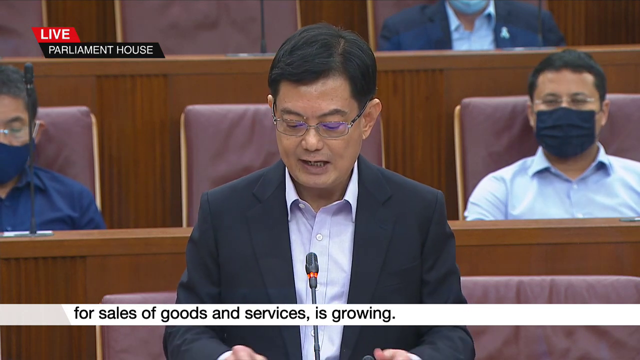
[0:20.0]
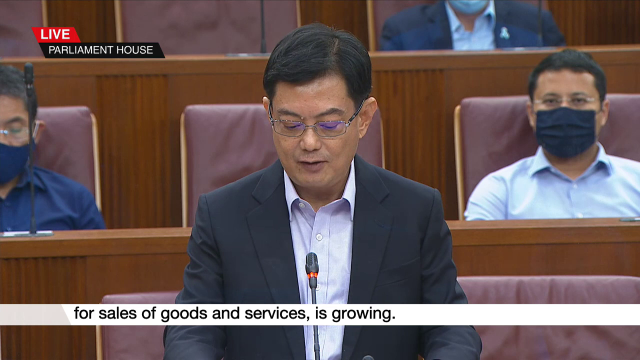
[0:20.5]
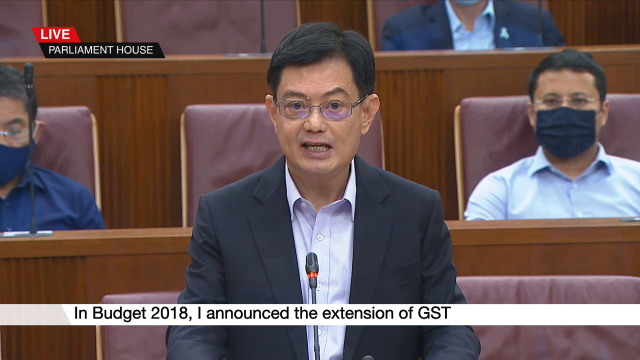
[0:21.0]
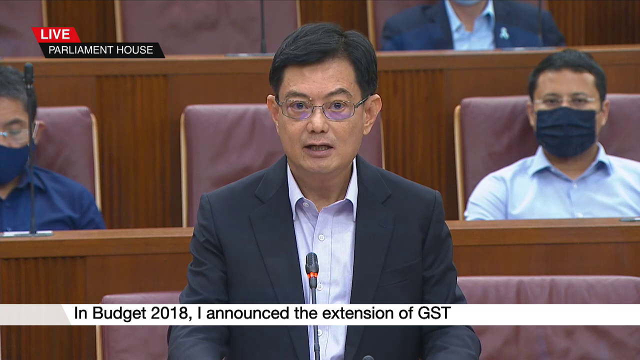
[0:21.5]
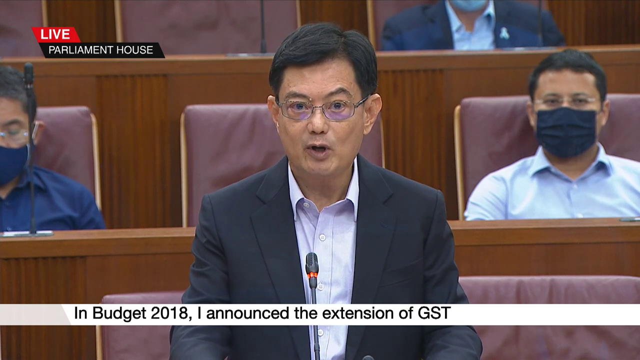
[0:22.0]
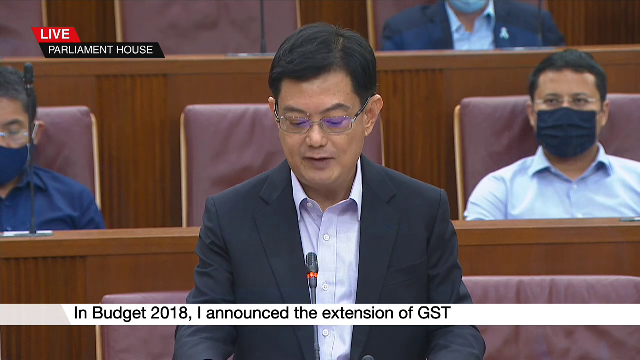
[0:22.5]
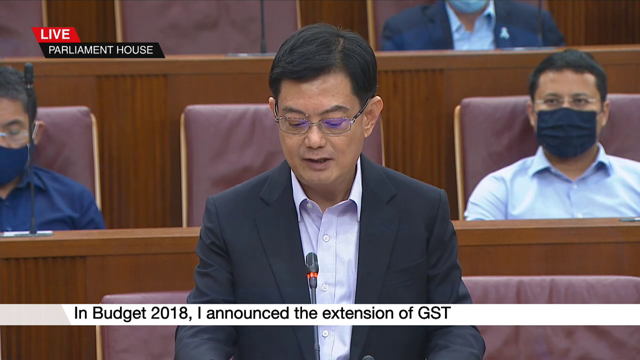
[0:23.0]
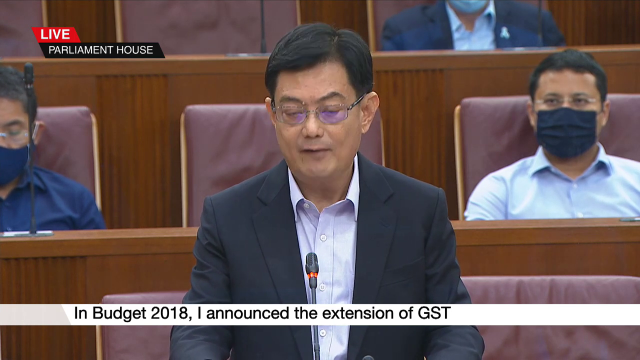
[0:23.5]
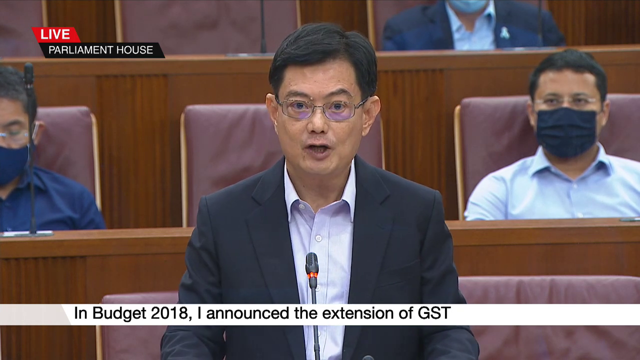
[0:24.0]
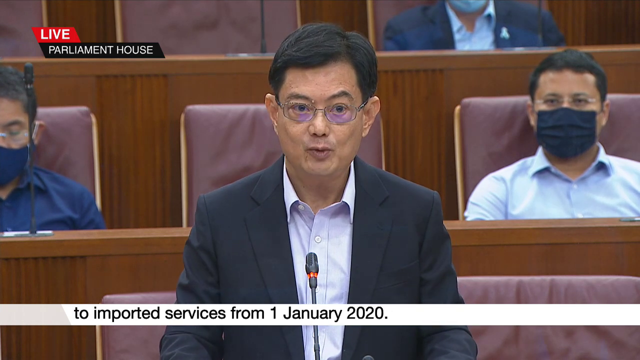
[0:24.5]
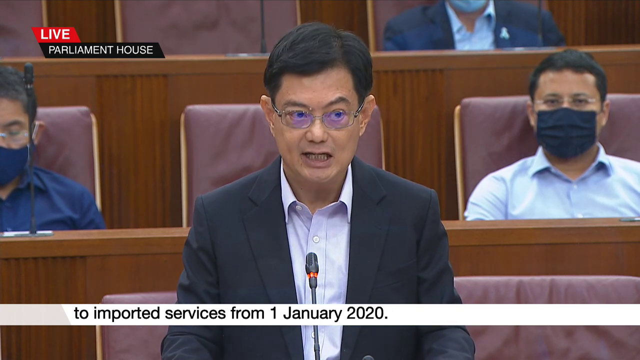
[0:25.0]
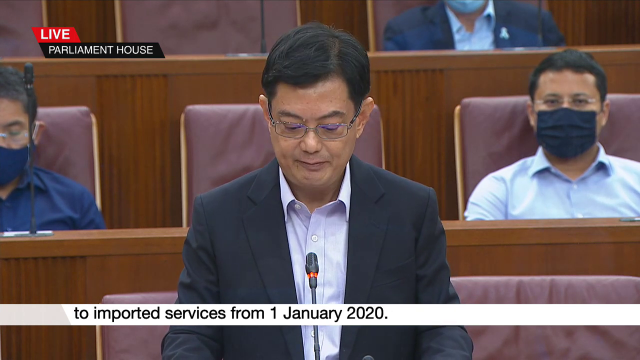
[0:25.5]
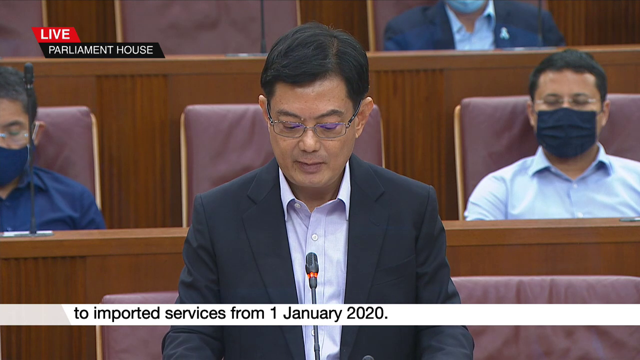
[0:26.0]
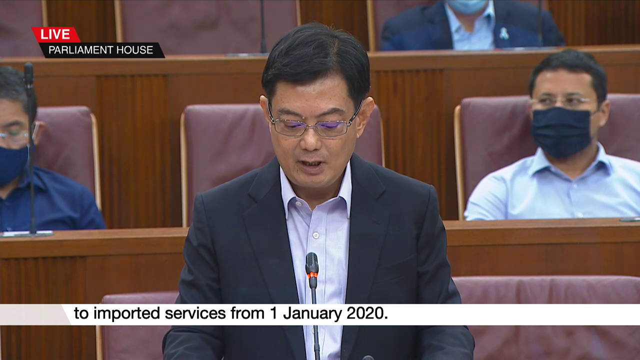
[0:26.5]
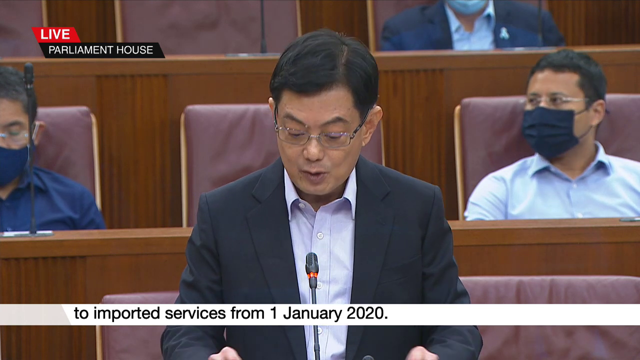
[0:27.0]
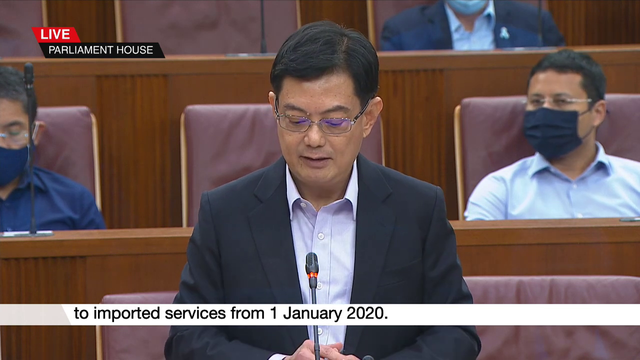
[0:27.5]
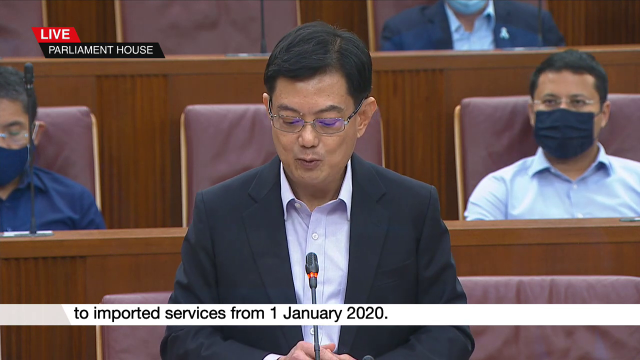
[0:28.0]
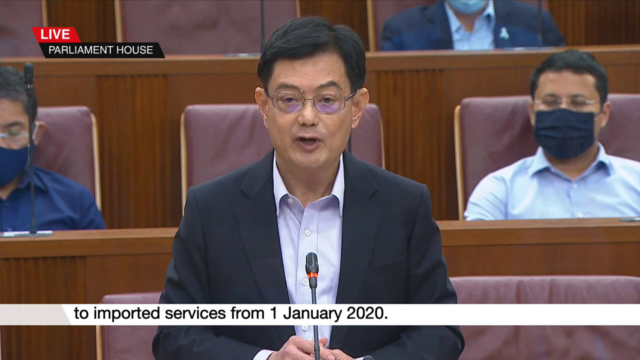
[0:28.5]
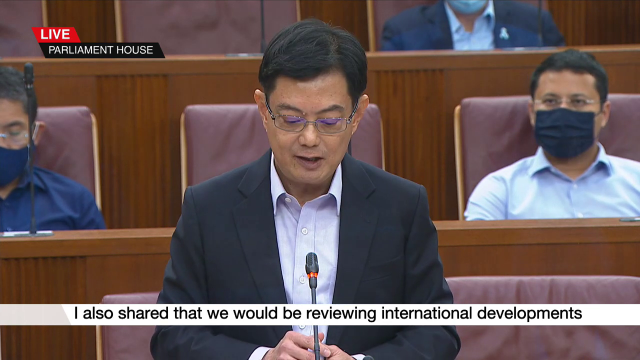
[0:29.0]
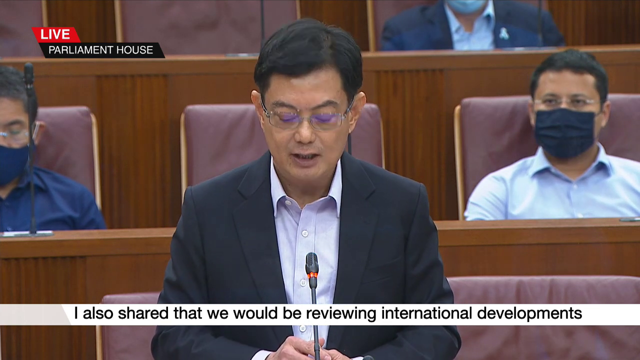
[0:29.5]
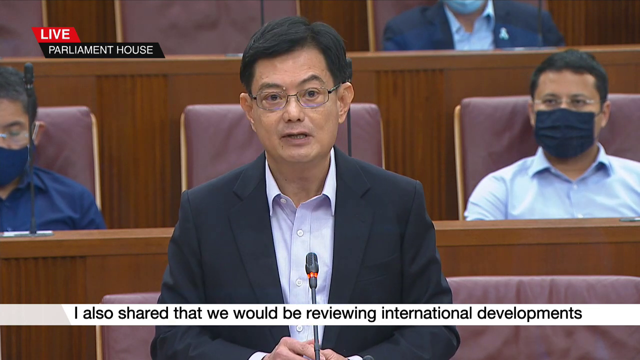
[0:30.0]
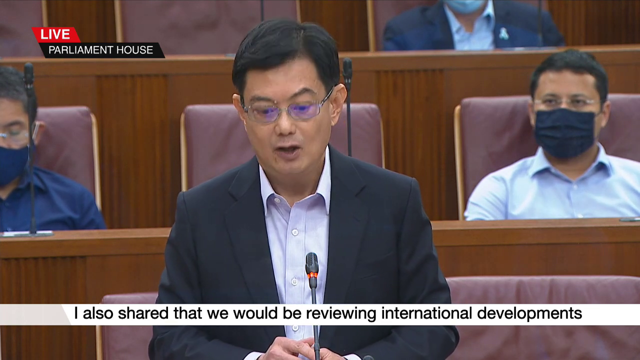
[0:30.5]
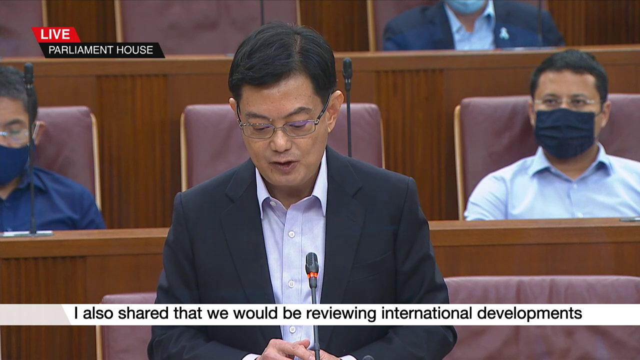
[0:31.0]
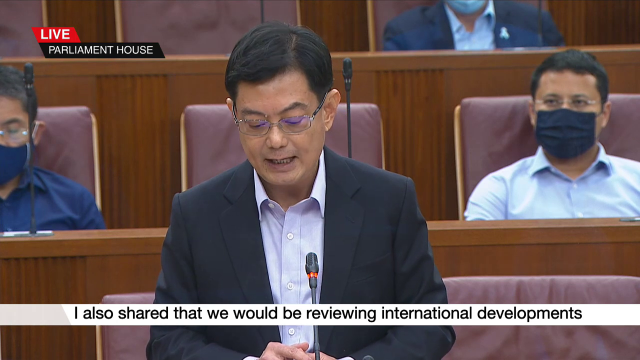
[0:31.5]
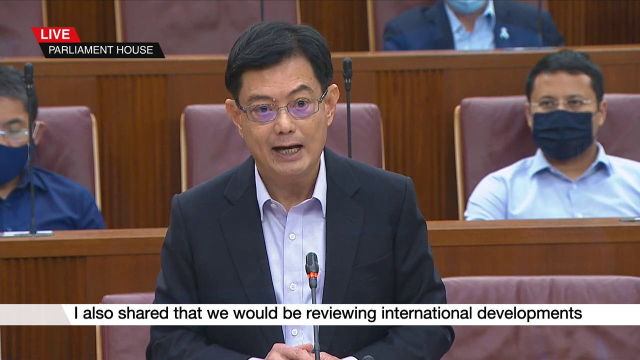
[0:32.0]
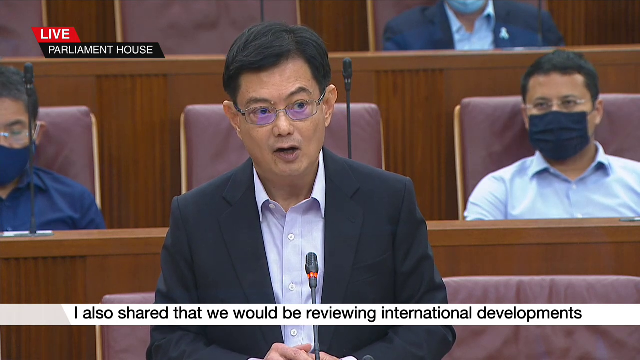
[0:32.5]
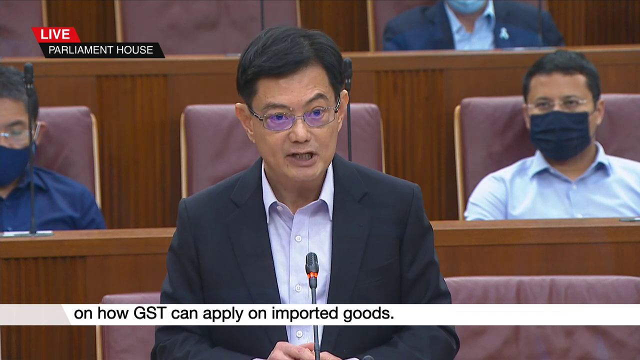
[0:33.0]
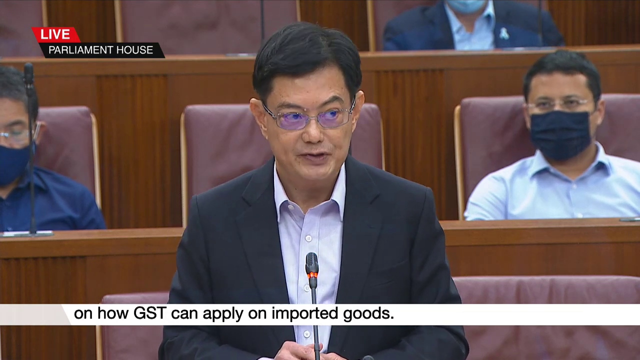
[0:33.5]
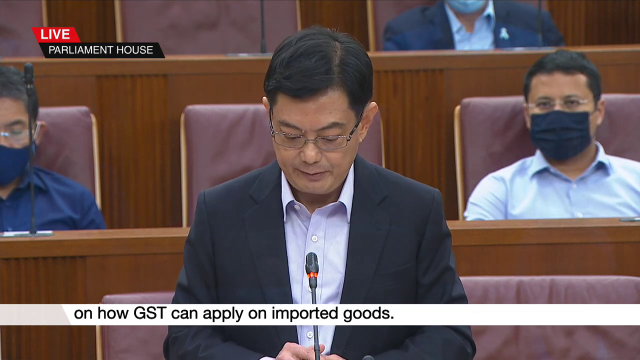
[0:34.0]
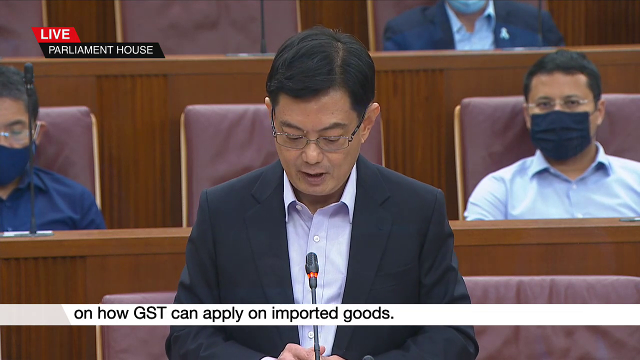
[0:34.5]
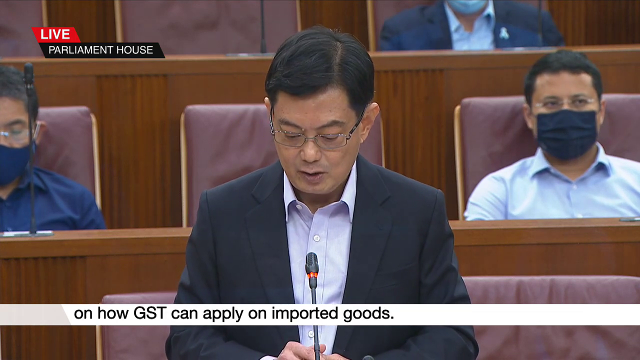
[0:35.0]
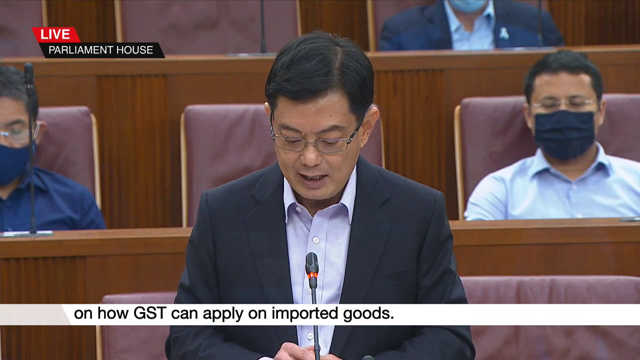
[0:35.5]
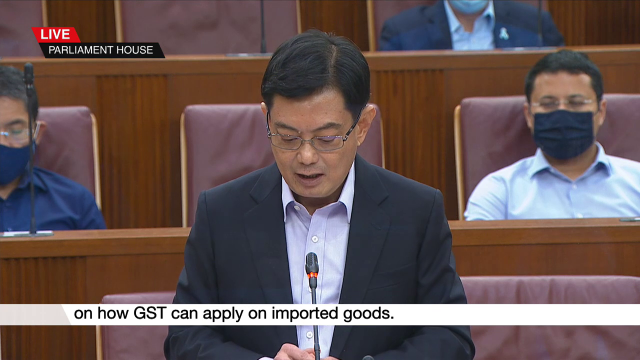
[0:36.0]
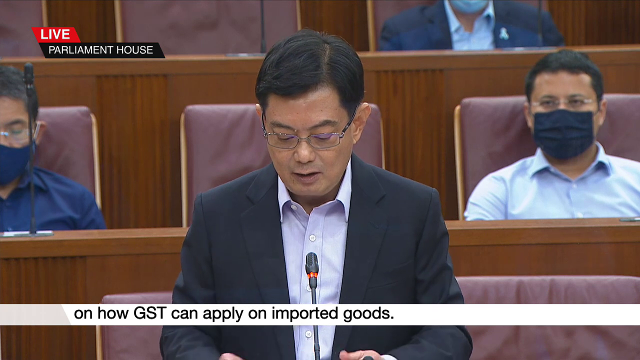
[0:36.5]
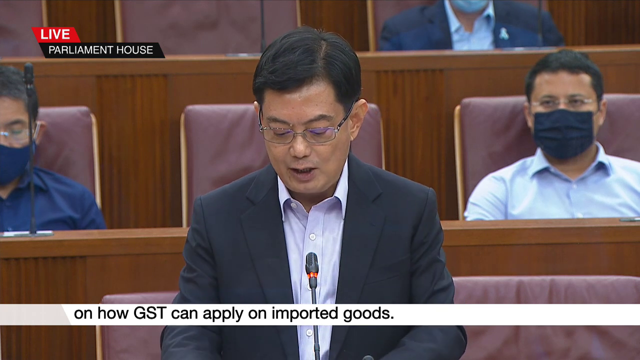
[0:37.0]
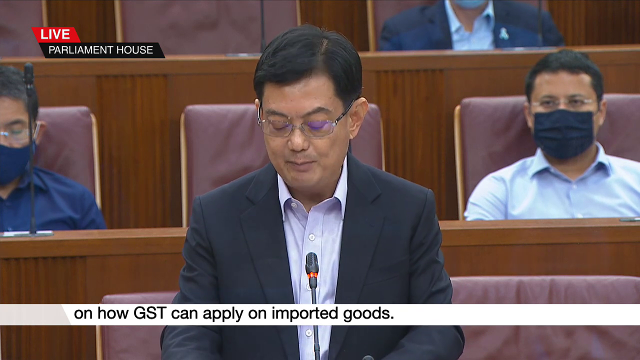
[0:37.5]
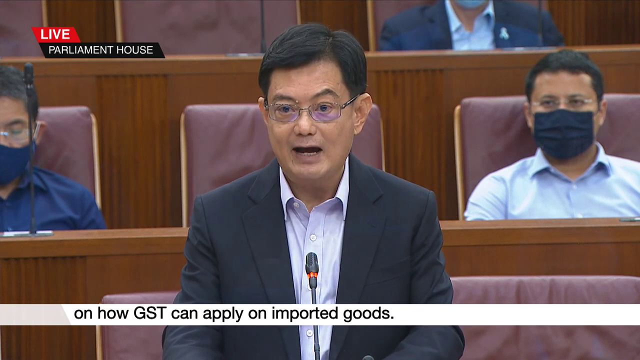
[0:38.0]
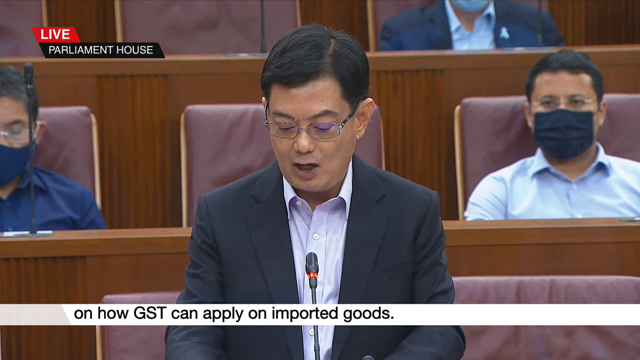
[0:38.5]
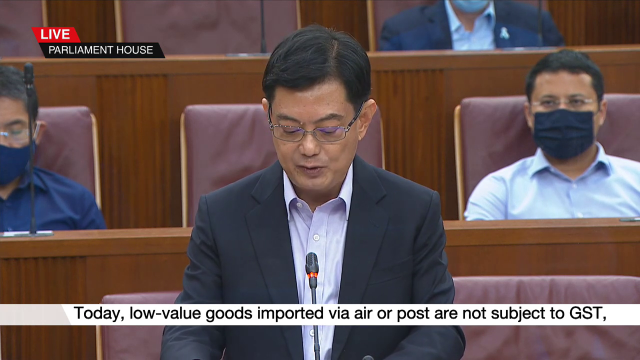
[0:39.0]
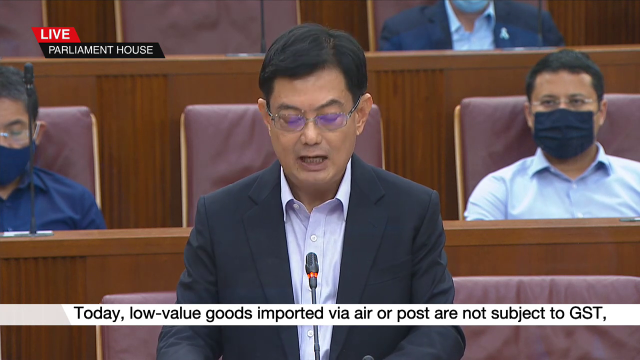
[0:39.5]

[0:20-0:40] The man continues his speech, addressing the other politicians in the room. He says, "In budget 2018, I announced the extension of GST to imported services from 1st of January 2020. I also shared that we would be reviewing international developments on how GST can apply to imported goods. Today, low-value goods imported via air or post are not subject to GST." The two men in the row behind him have masks on their faces.